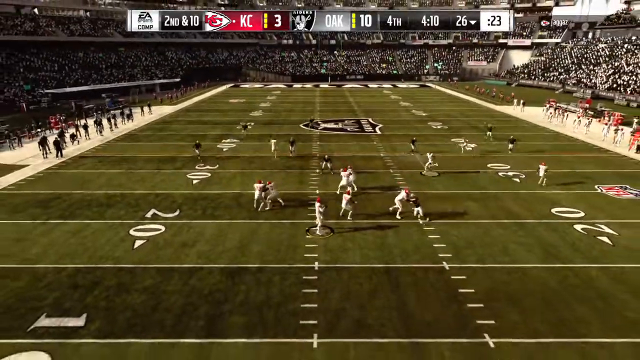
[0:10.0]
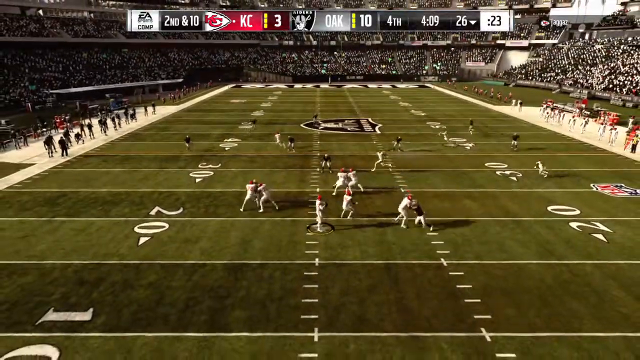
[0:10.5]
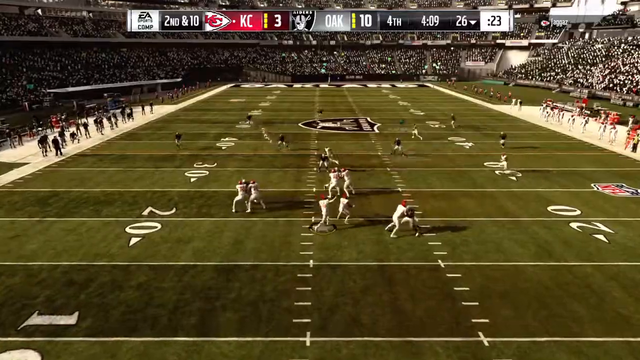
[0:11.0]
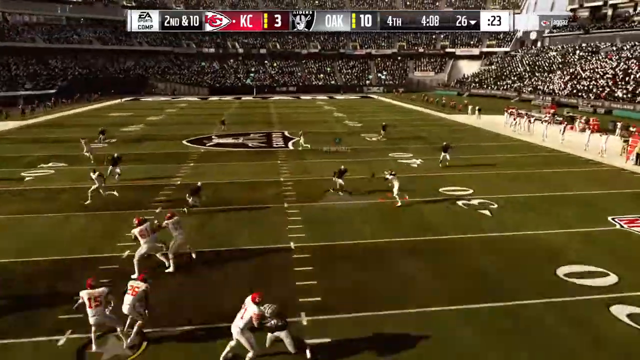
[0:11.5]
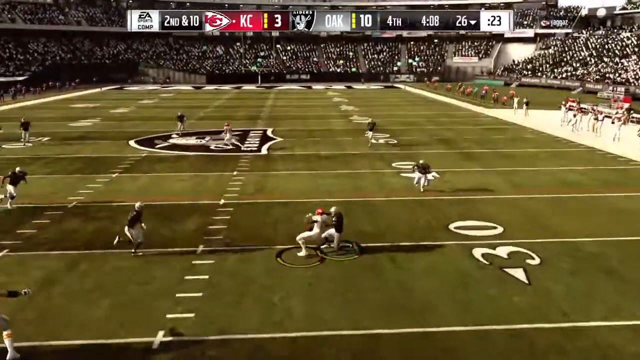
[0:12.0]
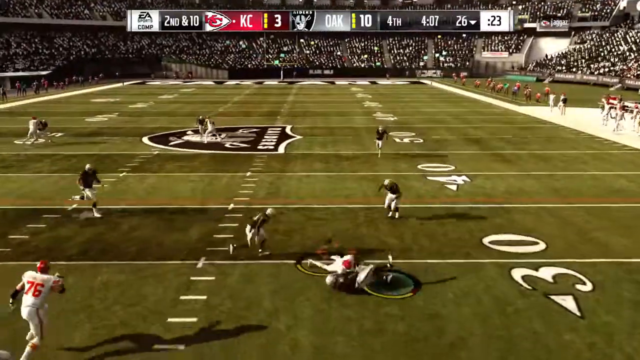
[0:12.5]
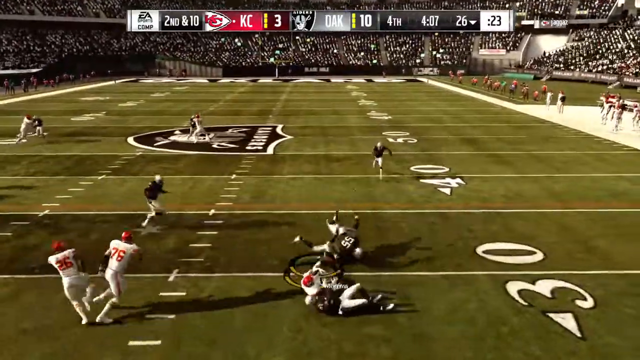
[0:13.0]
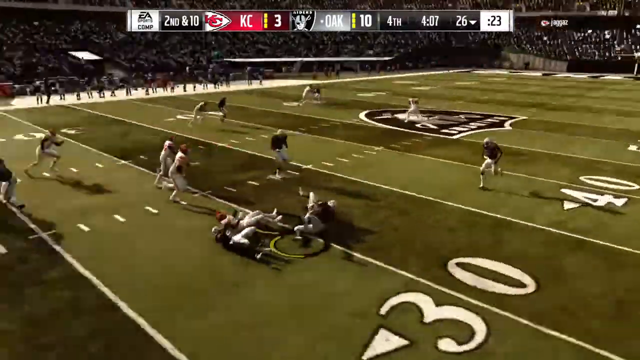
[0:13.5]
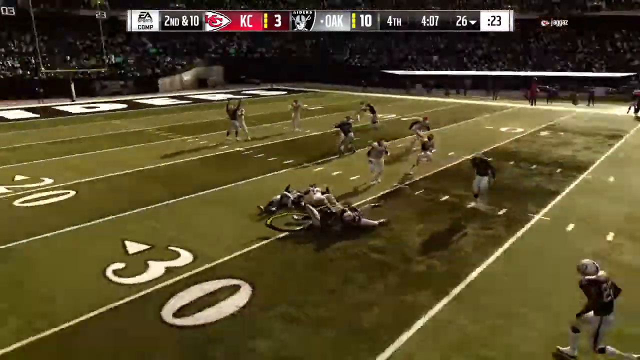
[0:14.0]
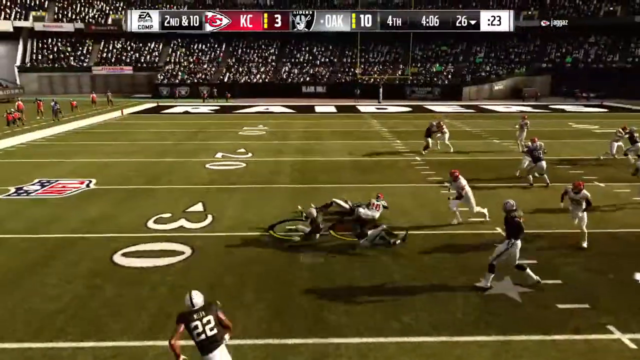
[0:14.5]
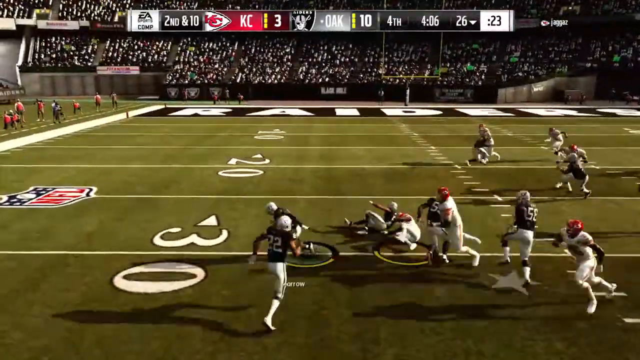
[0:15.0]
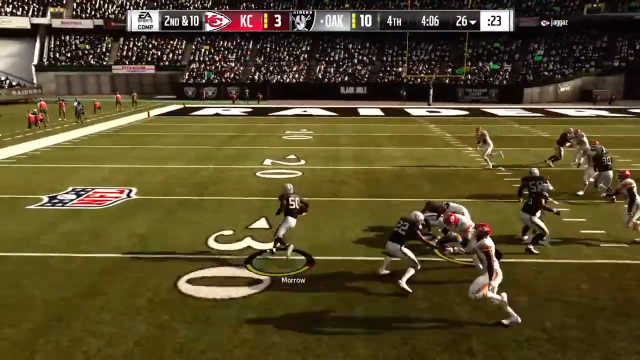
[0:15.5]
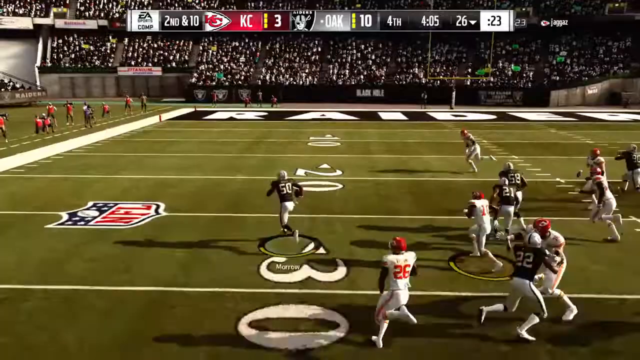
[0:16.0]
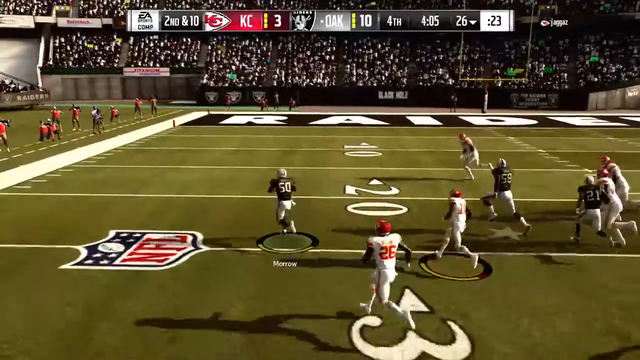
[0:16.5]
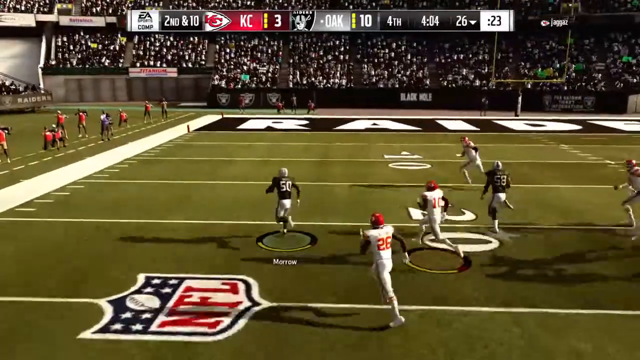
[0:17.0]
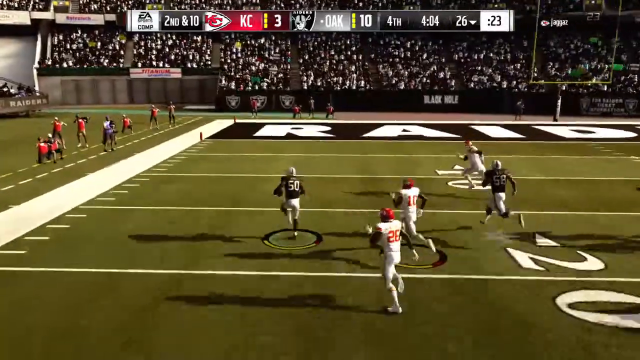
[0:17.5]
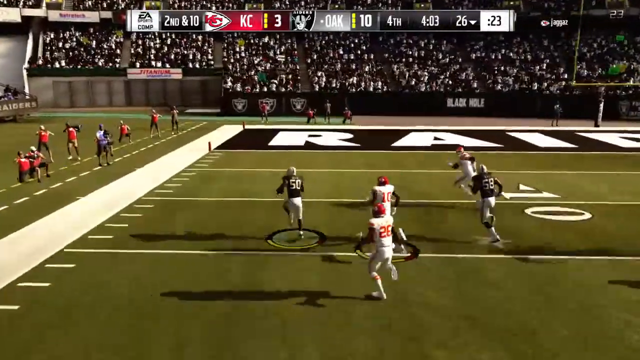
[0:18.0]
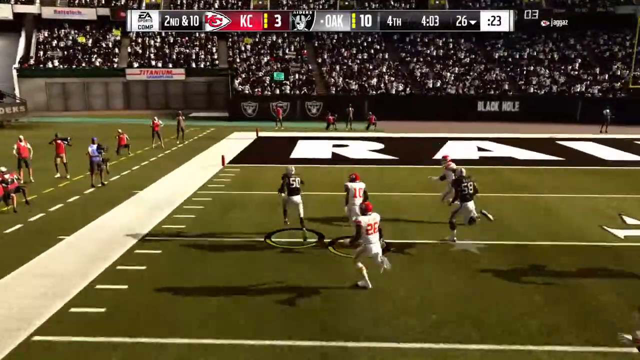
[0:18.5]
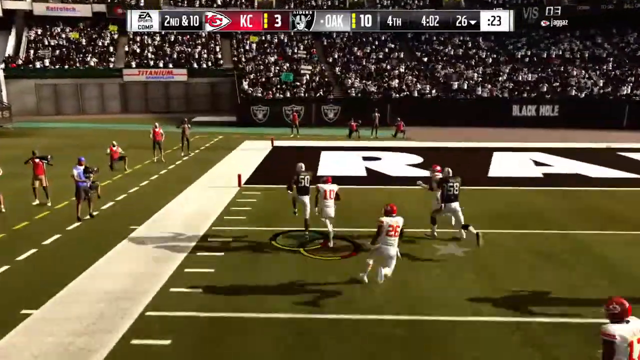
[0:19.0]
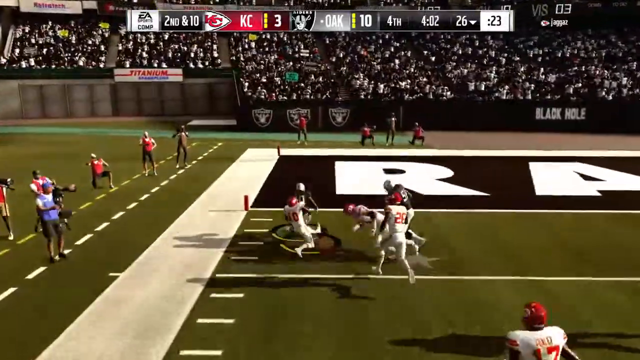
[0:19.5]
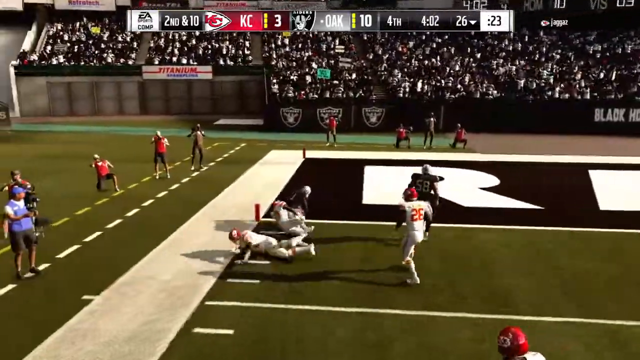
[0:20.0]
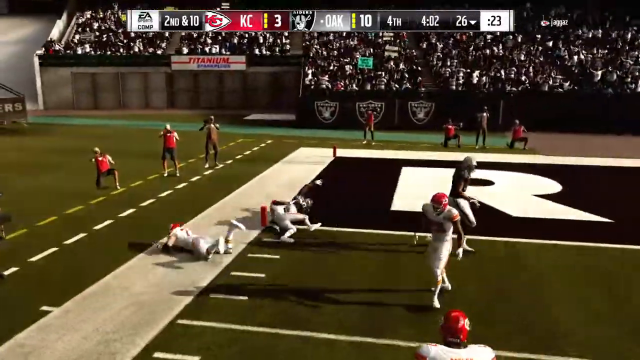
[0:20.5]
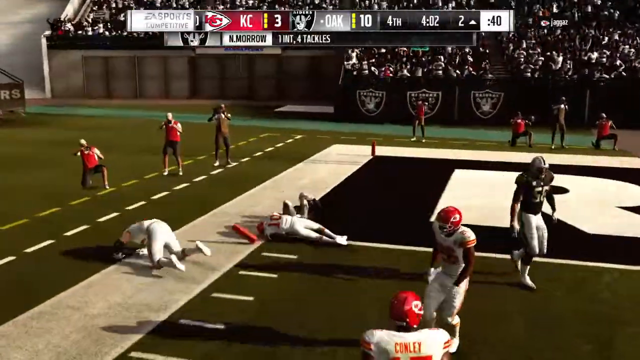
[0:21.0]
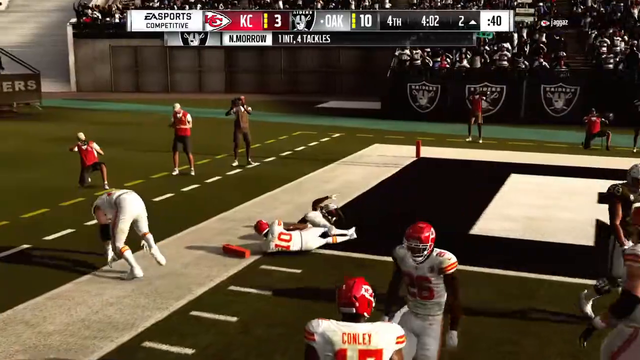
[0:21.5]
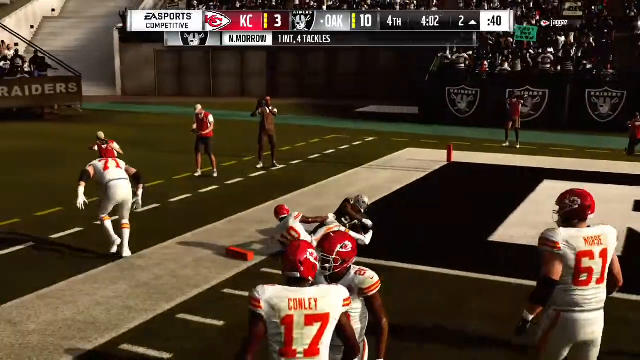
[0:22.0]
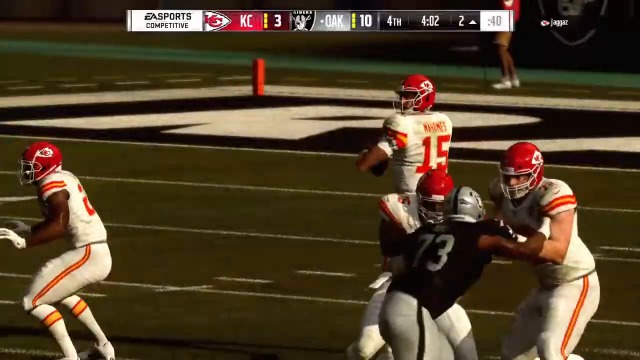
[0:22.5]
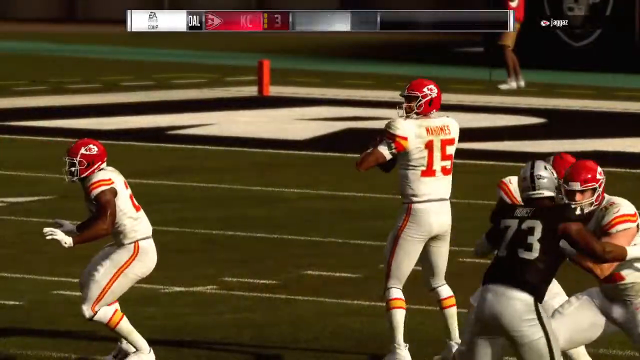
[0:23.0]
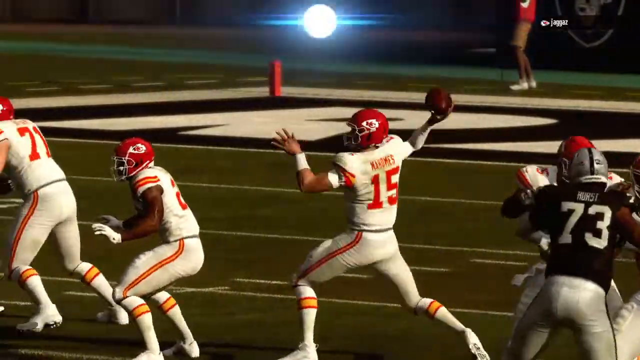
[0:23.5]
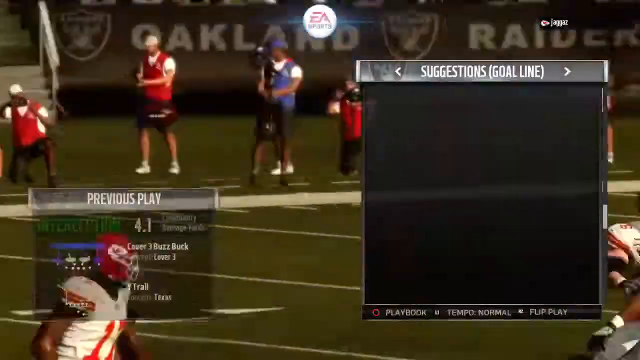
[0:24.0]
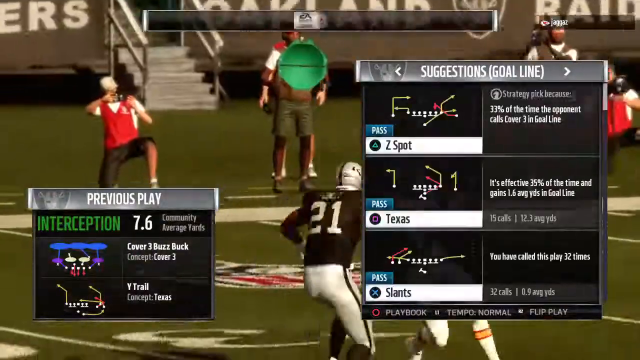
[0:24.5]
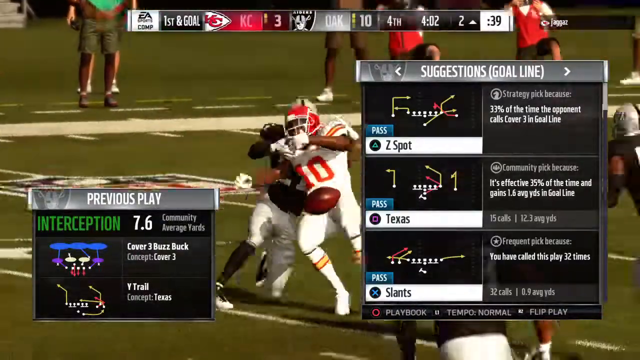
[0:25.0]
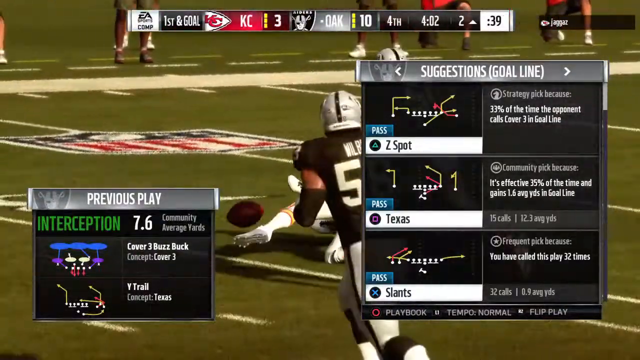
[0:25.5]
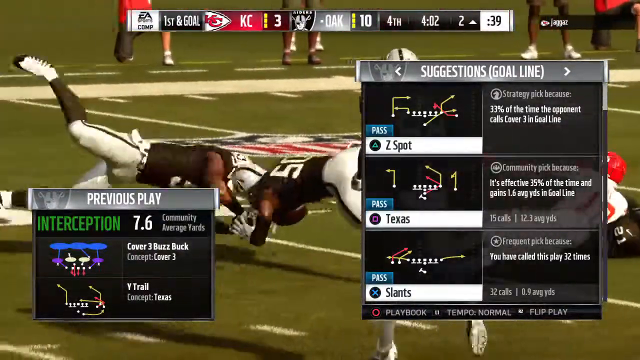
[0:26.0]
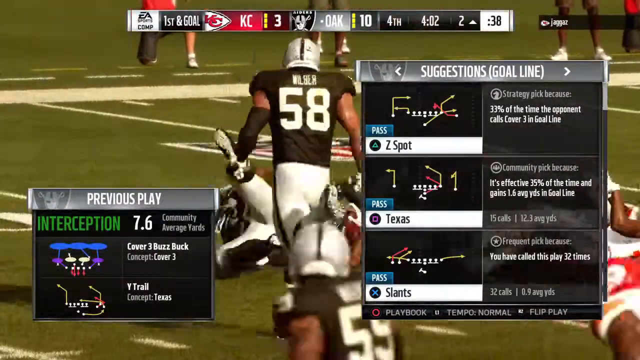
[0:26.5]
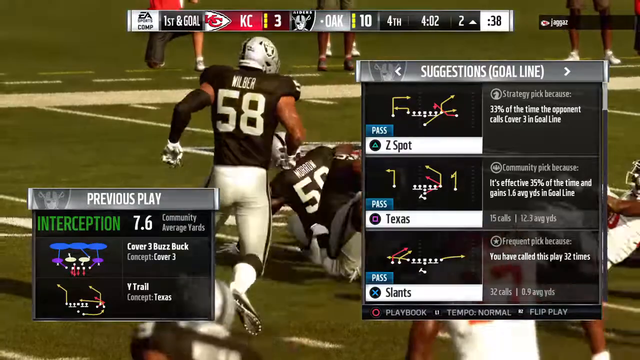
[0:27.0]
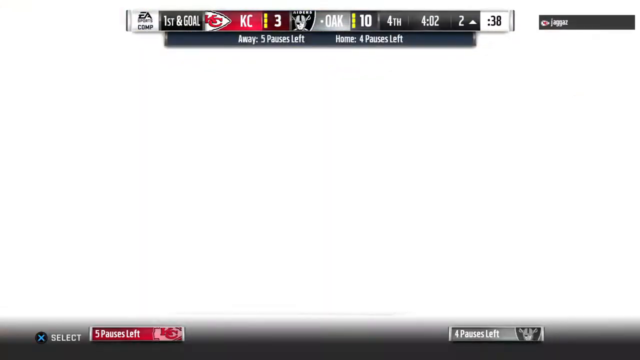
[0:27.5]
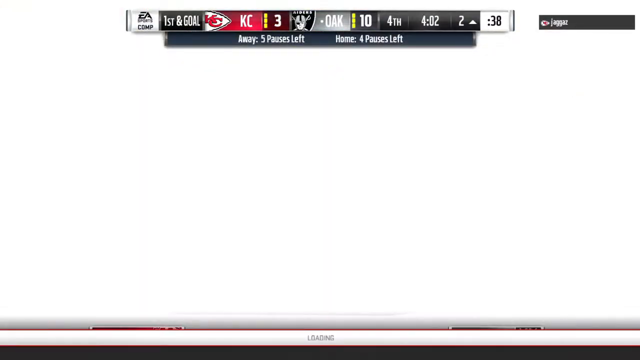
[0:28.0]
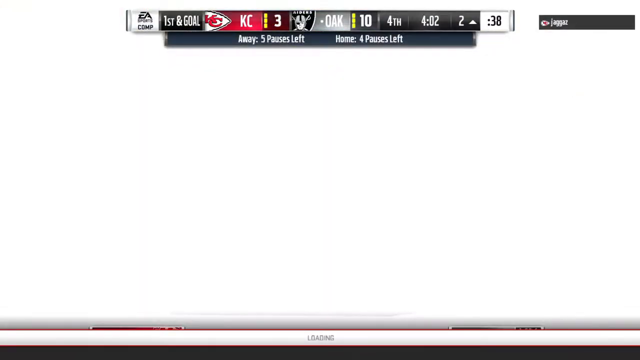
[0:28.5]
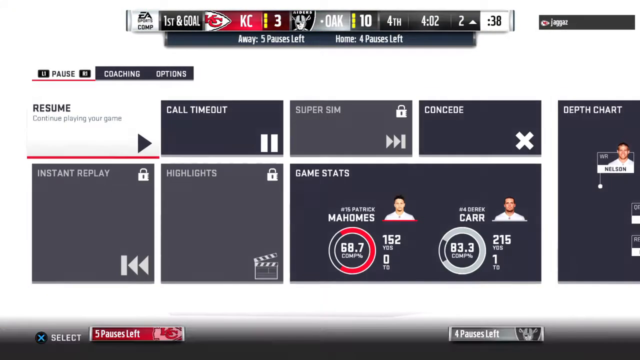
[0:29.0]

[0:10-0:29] An EA Sports video game that appears to be American football is shown. Two opposing sides play, running about the field and passing the ball; one side is dressed in white and red and the other in black and white. At one point a player is tackled to the floor, and a group of players fall down around him. A banner at the top gives the details and scores of the game, and the game is played on a green American football field with a crowd watching. One player runs to try to score a touchdown and is taken down just before he reaches the touchdown line. A replay follows, showing somebody passing the ball across and then a tackle. Two boxes then appear on the screen: a smaller one that says "previous play, interception 7.6" with various graphics, and another that says "suggestions goal line" and shows options such as a triangle "Z spot", a square "Texas" and an X "lance". It looks like a PlayStation game. At the very end the game is paused, and a pause screen shows options including "resume", "call timeout", "instant replay", "highlights", "game stats", "super sim", "concede" and "depth chart".